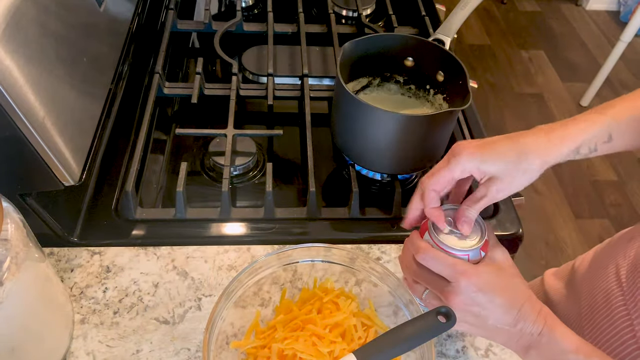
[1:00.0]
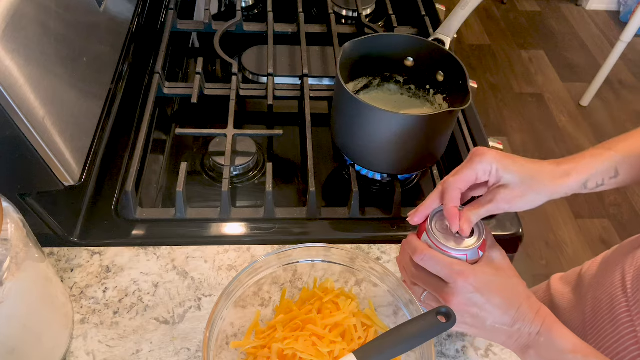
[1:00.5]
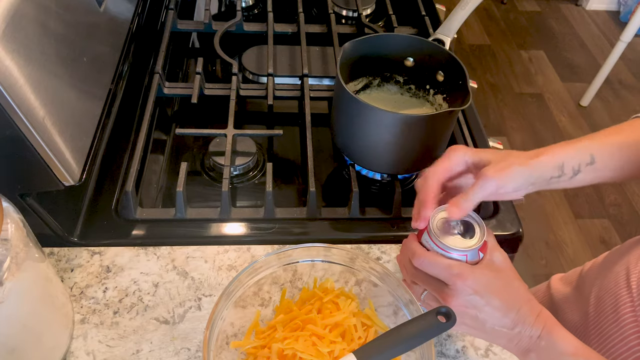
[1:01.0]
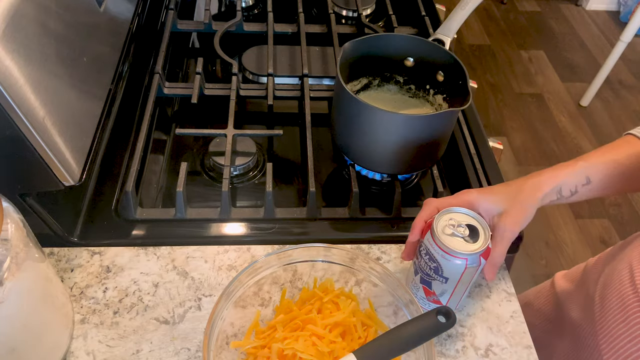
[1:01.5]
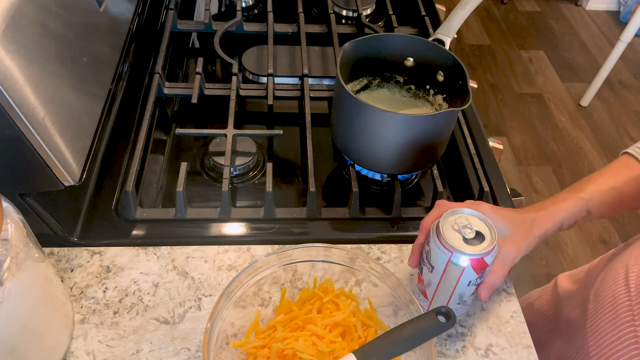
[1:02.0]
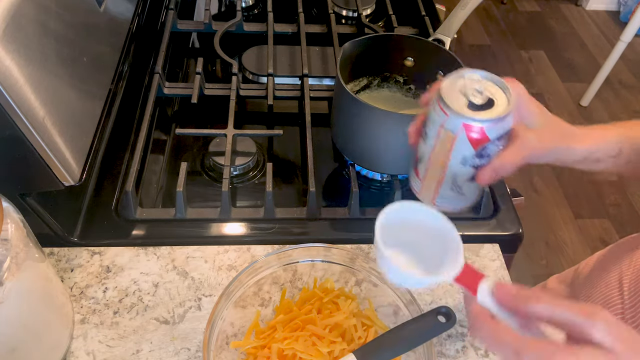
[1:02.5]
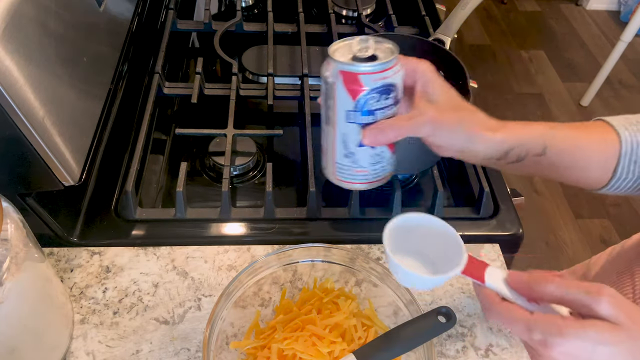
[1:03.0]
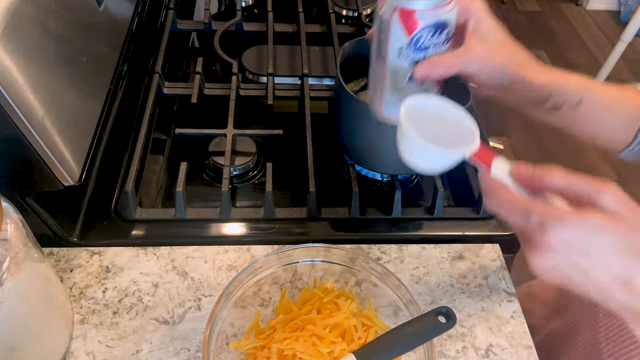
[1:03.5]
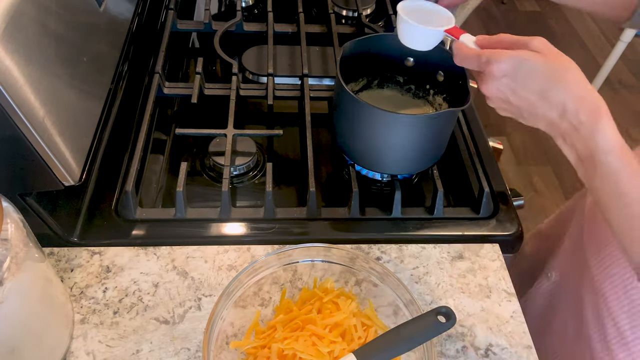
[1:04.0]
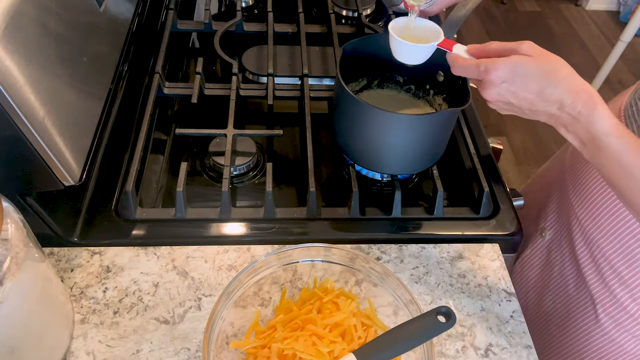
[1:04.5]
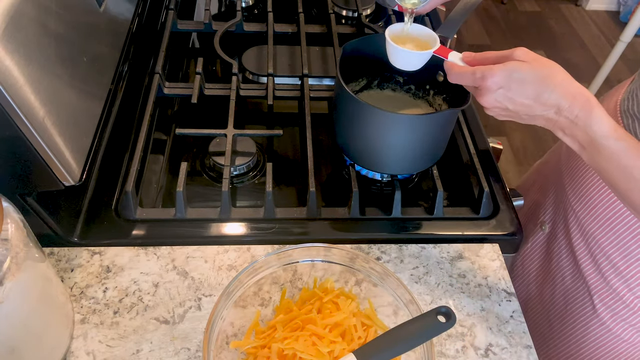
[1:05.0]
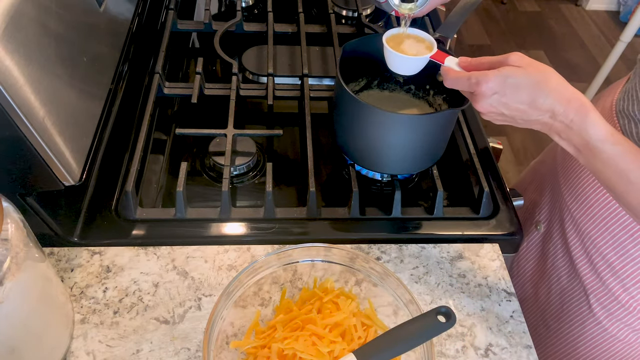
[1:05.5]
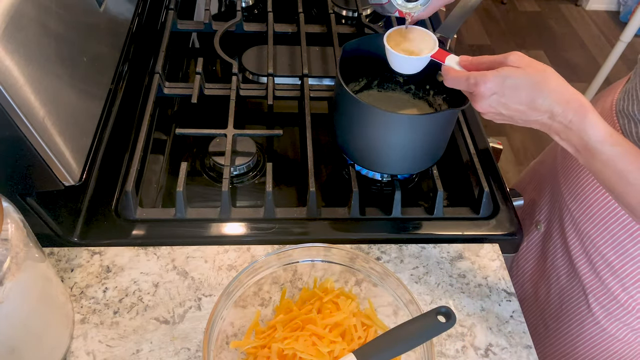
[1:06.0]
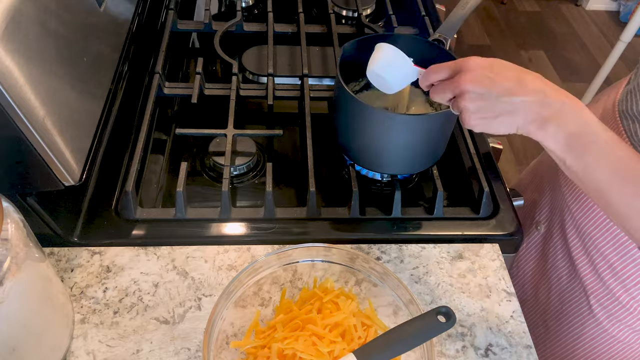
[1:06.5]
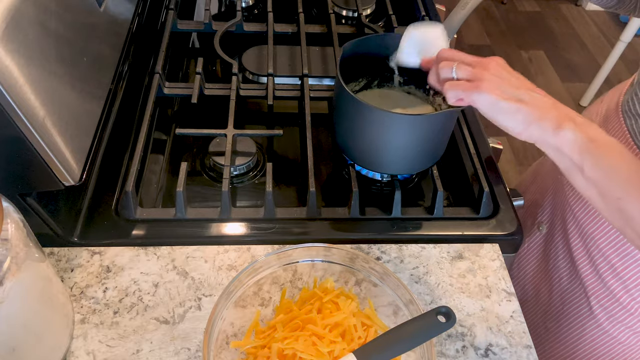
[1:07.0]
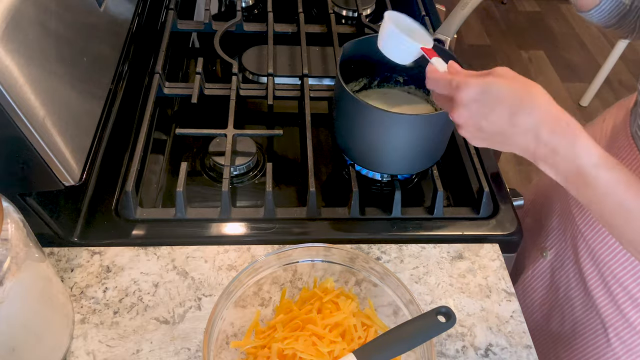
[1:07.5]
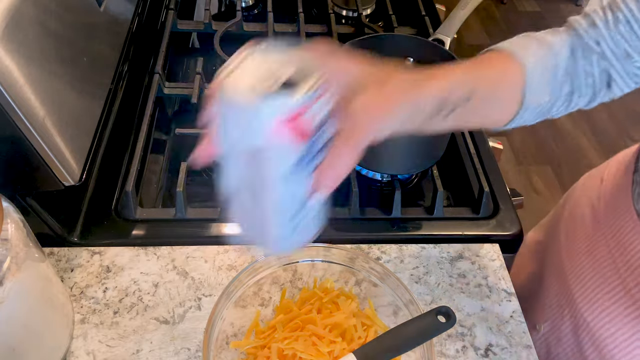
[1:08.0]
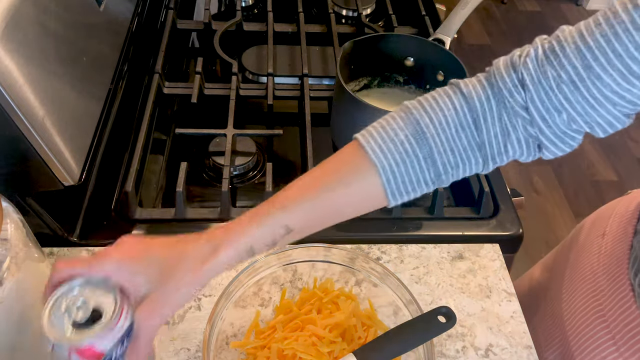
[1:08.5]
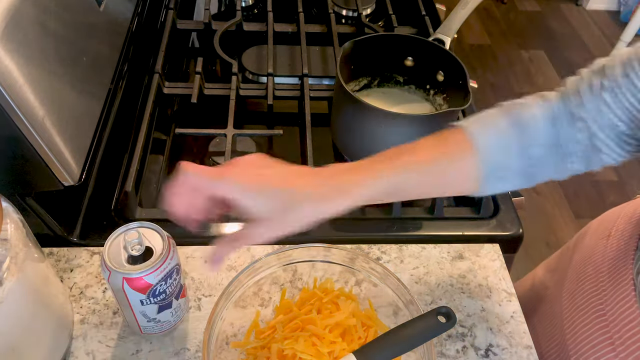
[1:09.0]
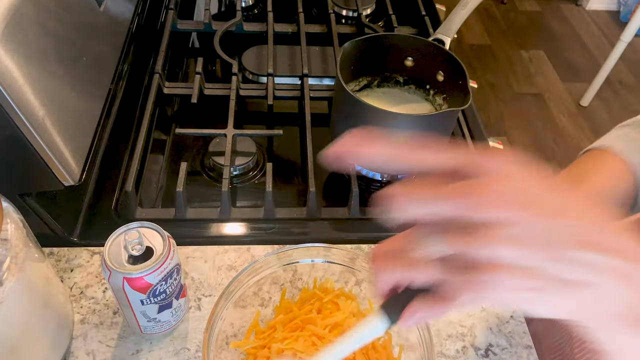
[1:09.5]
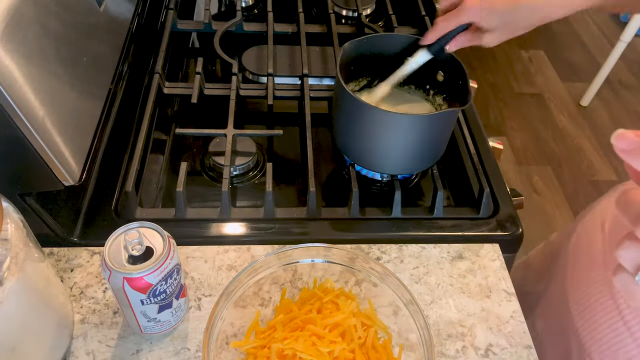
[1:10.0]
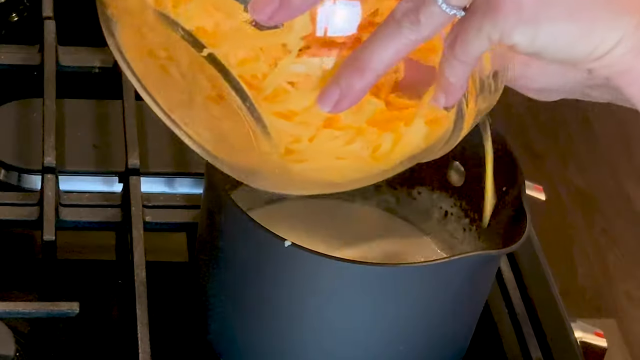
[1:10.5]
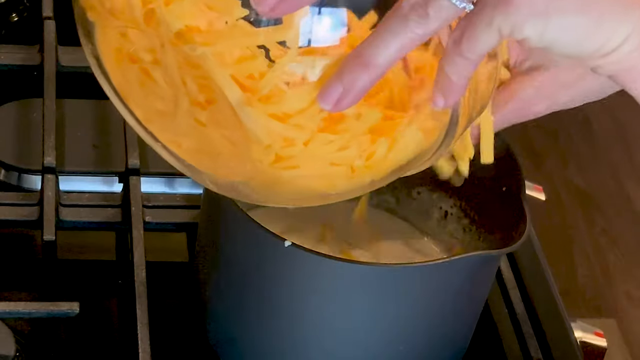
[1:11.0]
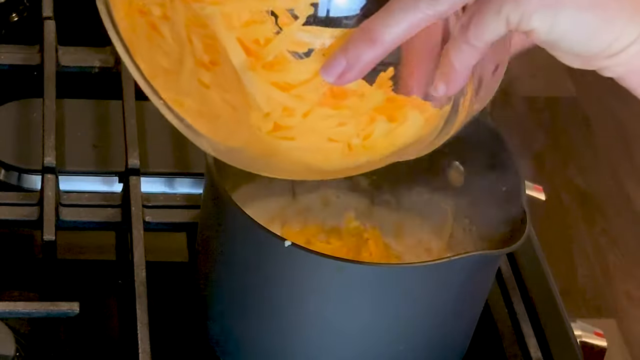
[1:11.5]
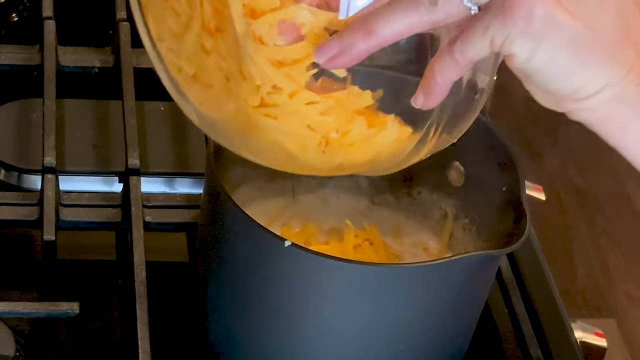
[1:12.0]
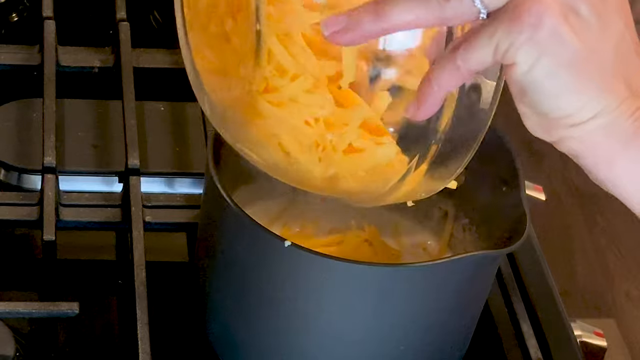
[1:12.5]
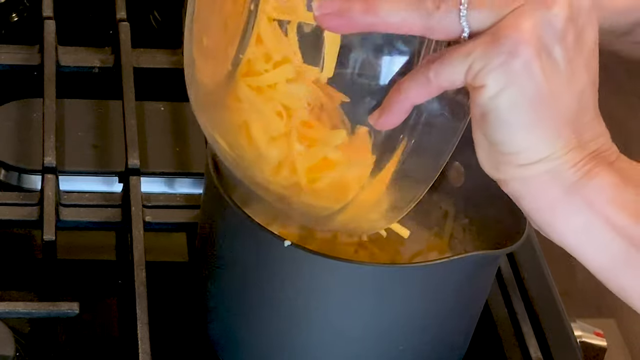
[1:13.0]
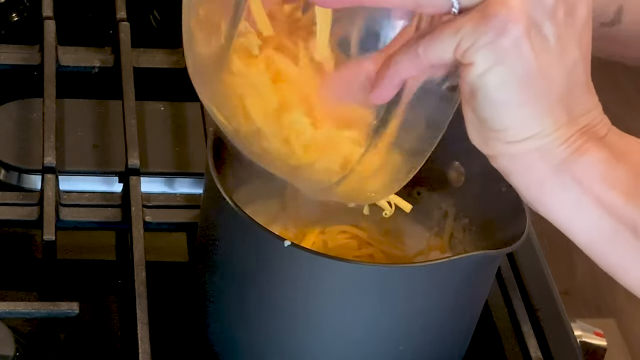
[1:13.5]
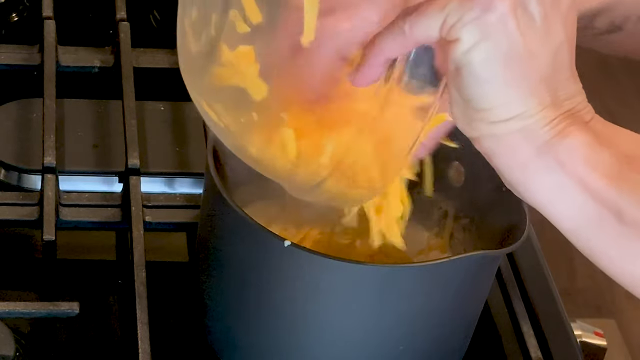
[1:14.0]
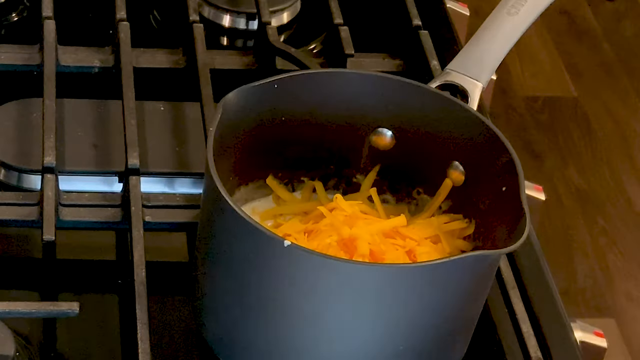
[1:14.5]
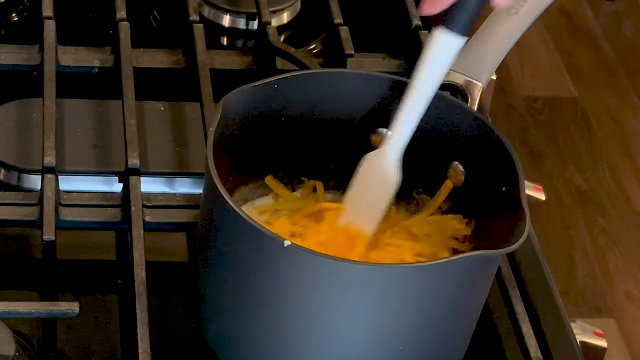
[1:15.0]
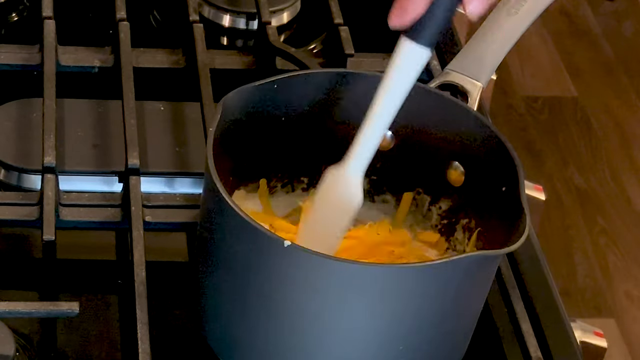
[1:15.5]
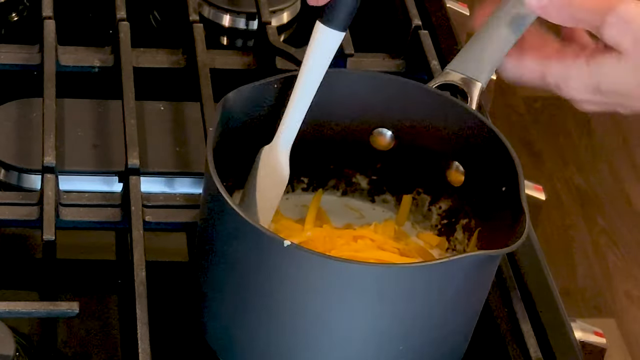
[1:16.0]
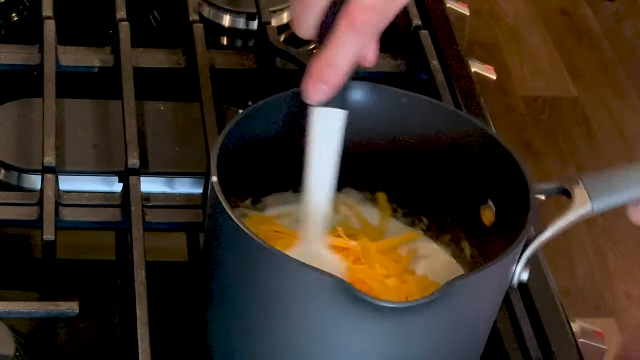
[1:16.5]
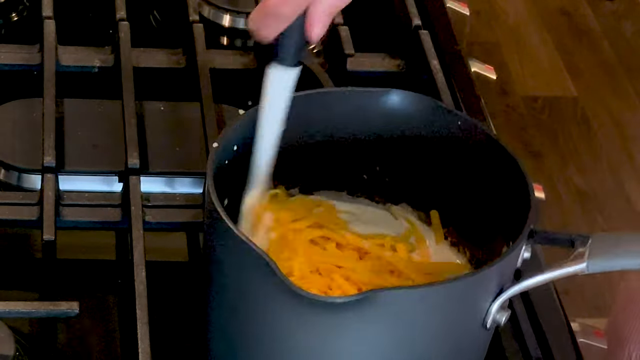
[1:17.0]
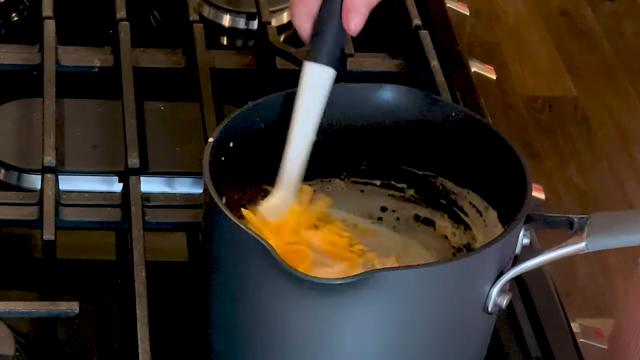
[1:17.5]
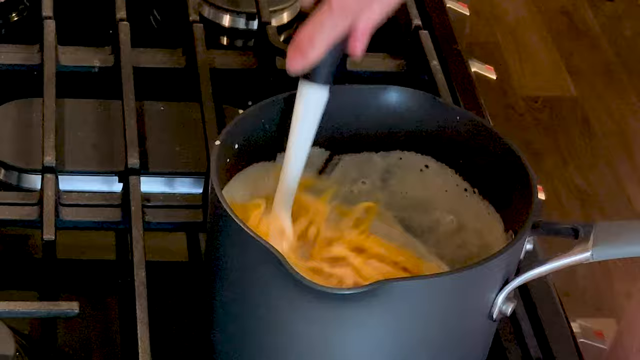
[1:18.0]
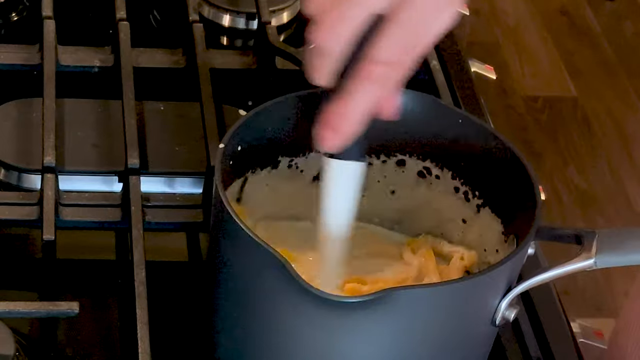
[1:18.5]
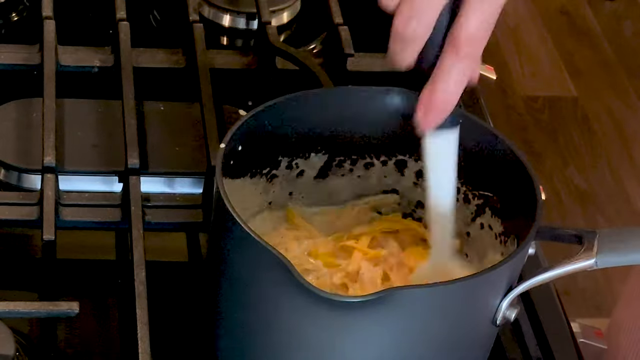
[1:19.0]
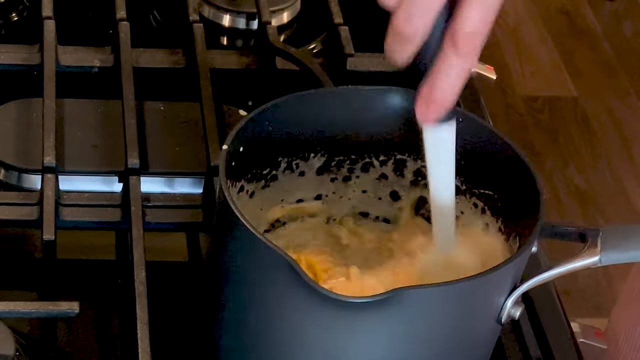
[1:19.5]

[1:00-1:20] She takes a can of cool drink and measures the amount to put into the pan with a measuring tool. Smoke rises from the pan as it cooks. She adds grated cheese to the pan and stirs the mix with a plastic spoon.